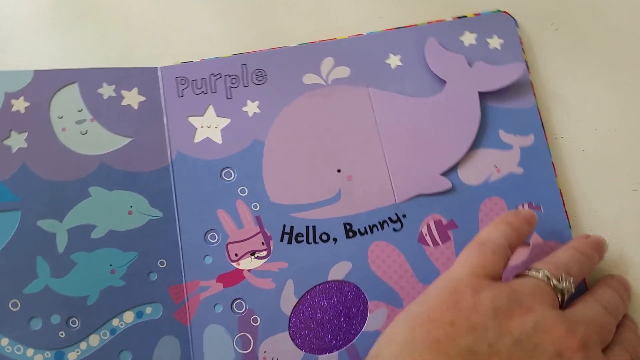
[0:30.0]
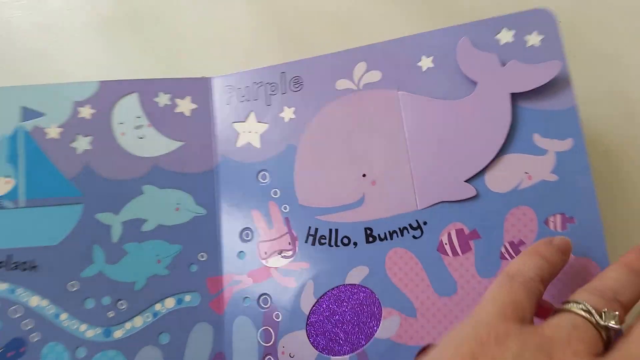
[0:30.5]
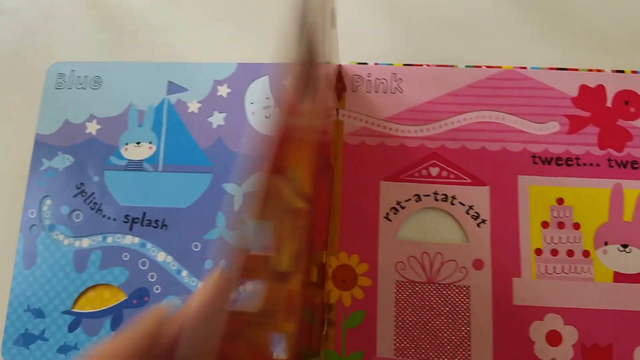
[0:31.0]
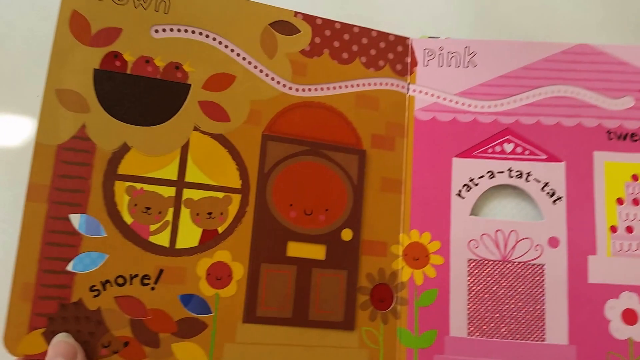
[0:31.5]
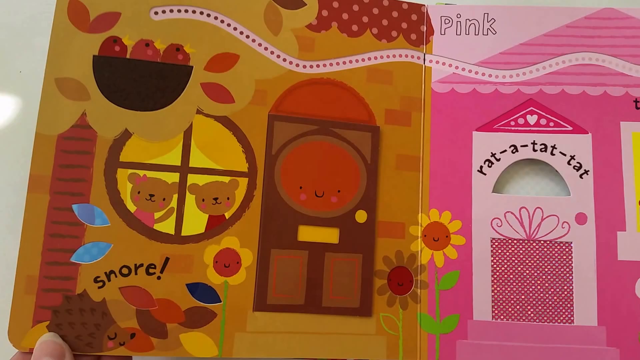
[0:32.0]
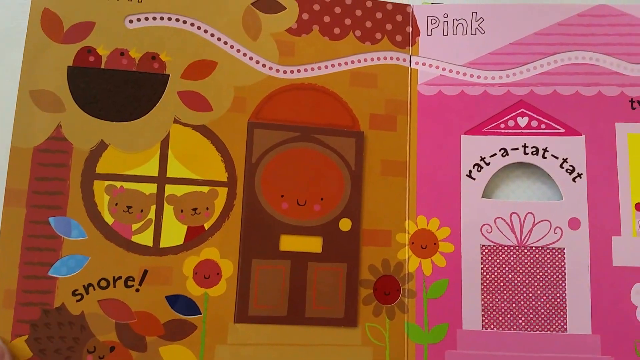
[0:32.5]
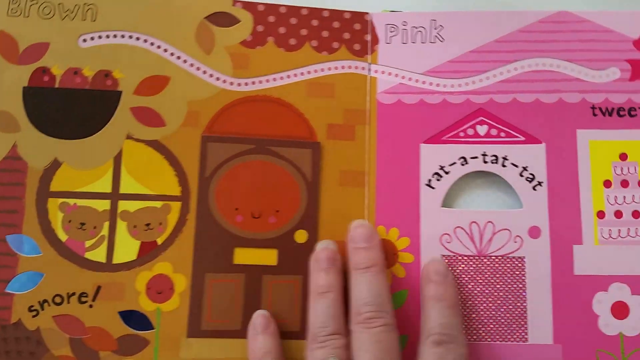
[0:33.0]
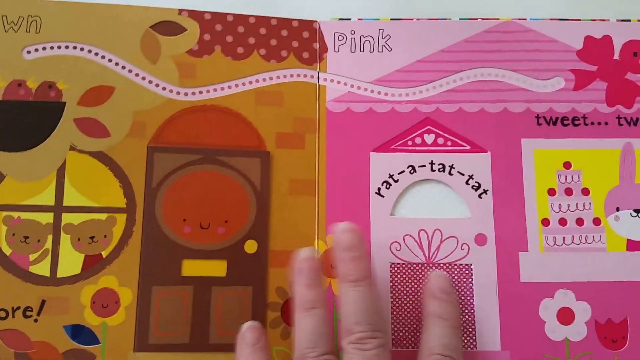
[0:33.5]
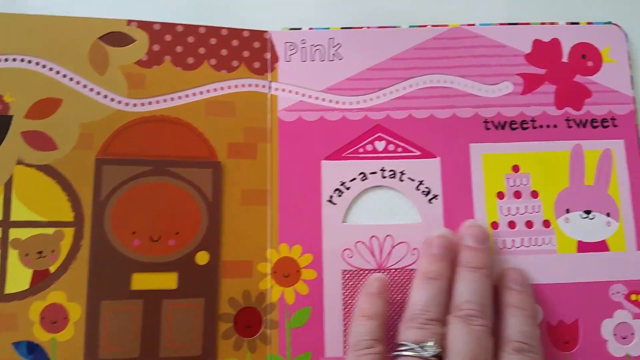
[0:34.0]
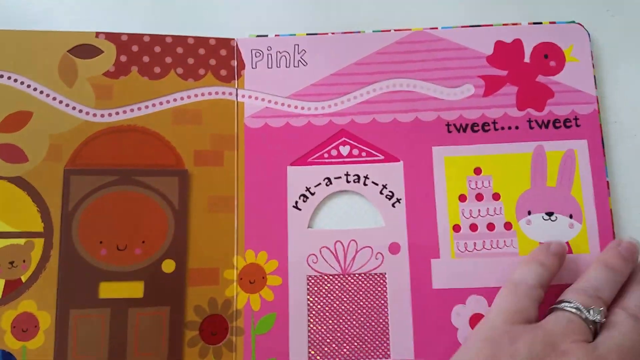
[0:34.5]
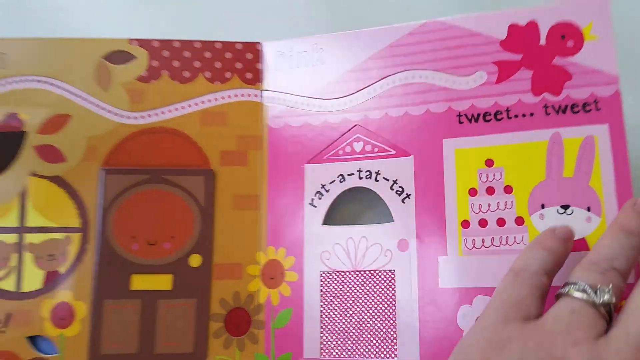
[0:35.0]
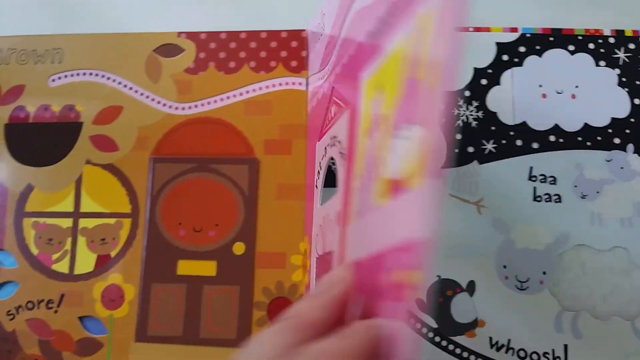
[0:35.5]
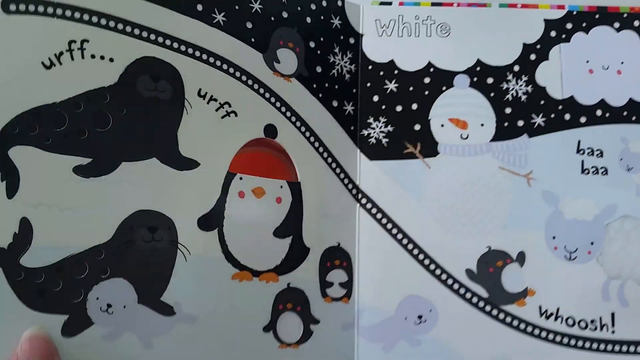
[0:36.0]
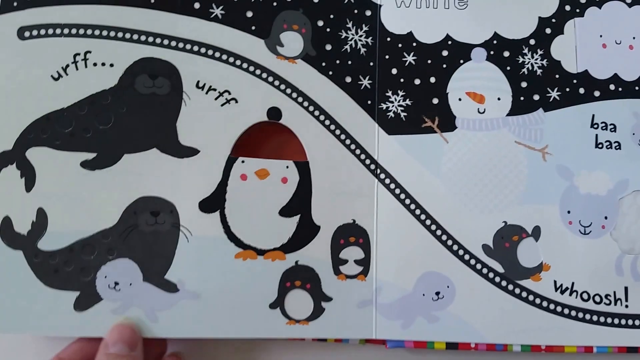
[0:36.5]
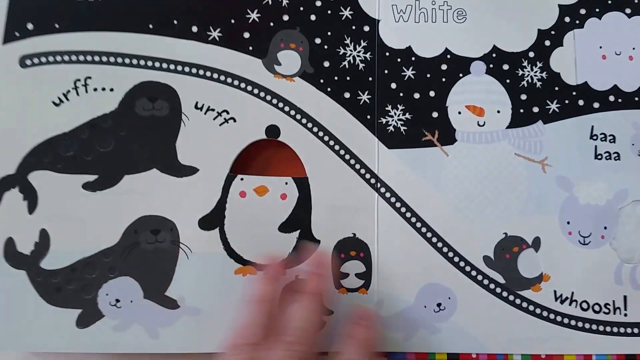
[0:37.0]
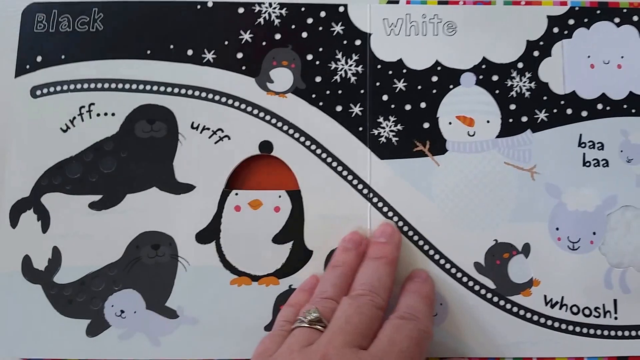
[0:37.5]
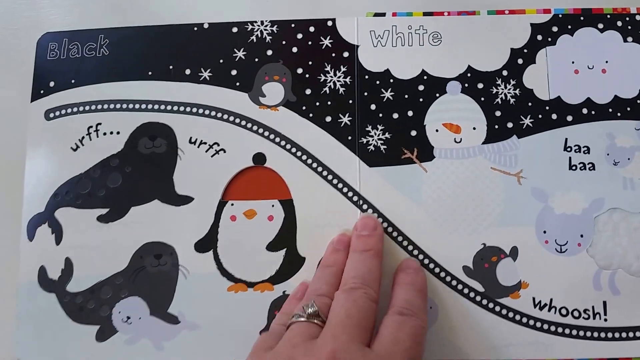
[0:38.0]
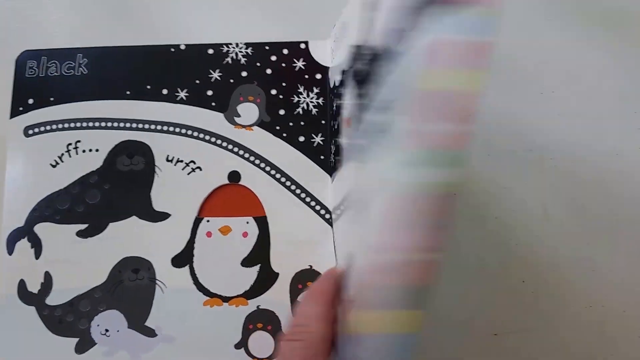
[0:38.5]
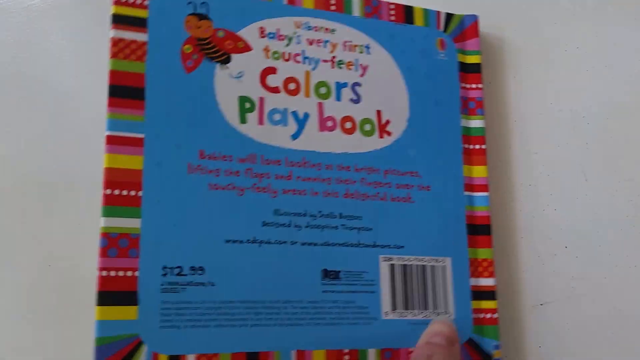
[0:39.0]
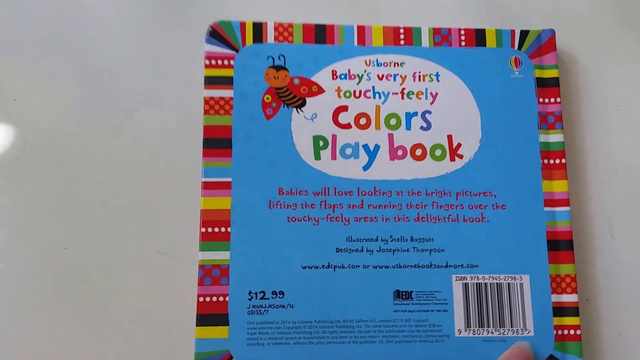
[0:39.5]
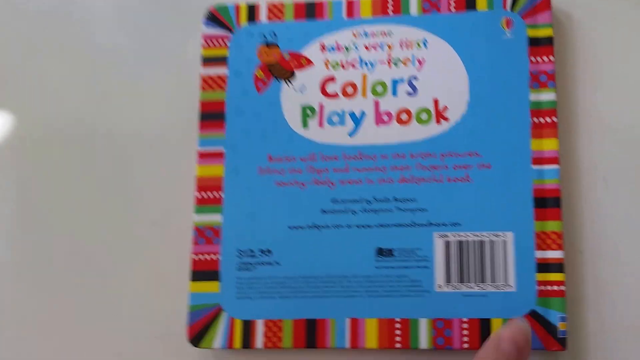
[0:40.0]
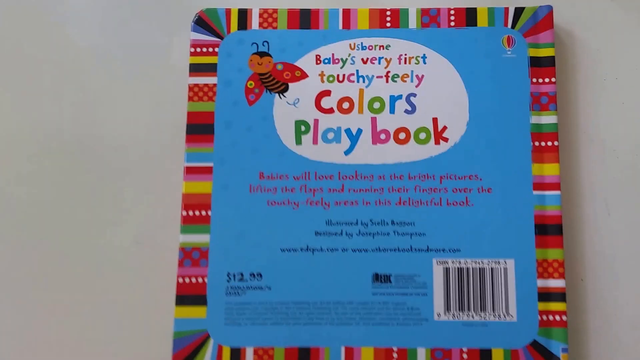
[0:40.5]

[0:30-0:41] The book stays briefly on the purple page before the person turns to the brown page, which shows some bears in a window inside their house along with what looks like some sort of animal snoring outside. Next comes the pink page, showing a pink bunny with a pink frosted cake with red roses on it and a pink house. The following page is black, with a bunch of black seals and a penguin, and on the right a white page shows another penguin along with some lambs, a snowman and a cloud.